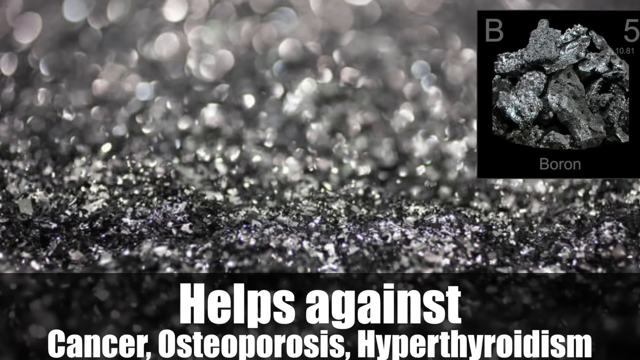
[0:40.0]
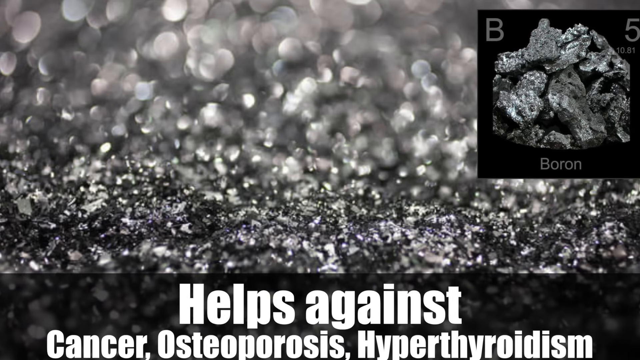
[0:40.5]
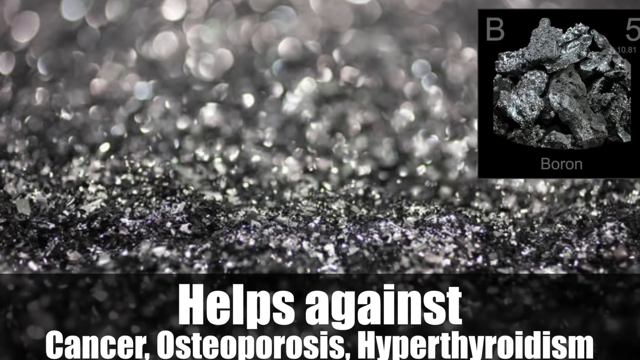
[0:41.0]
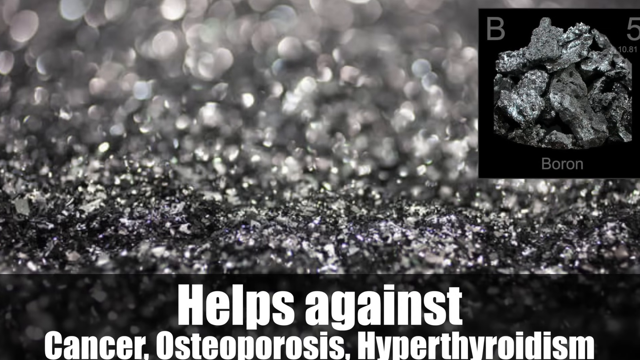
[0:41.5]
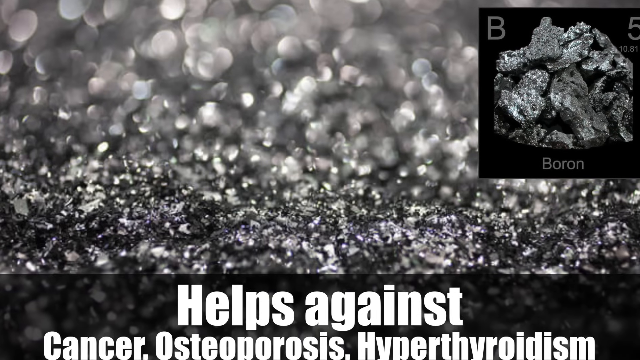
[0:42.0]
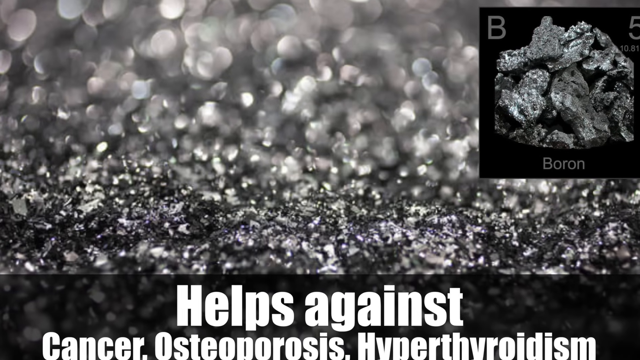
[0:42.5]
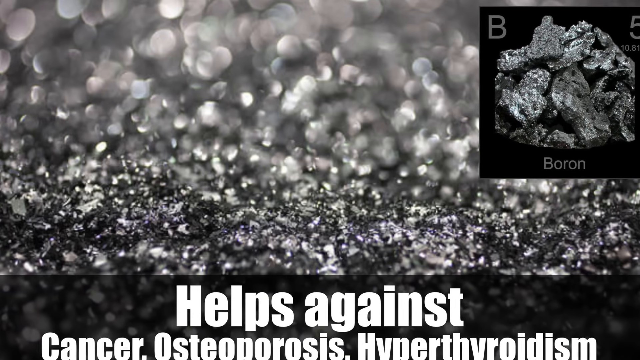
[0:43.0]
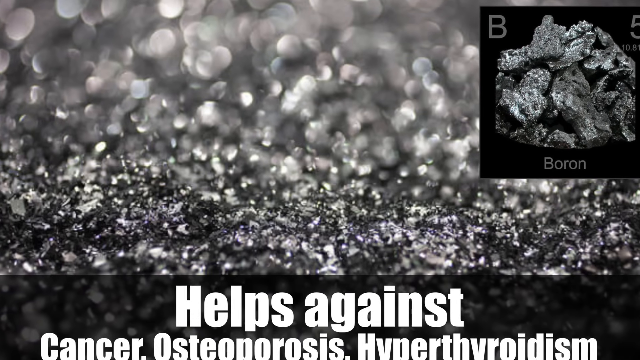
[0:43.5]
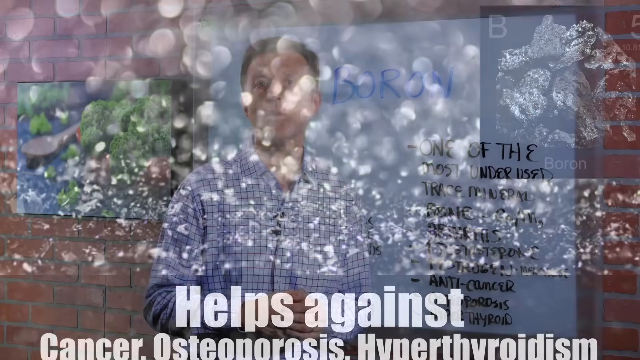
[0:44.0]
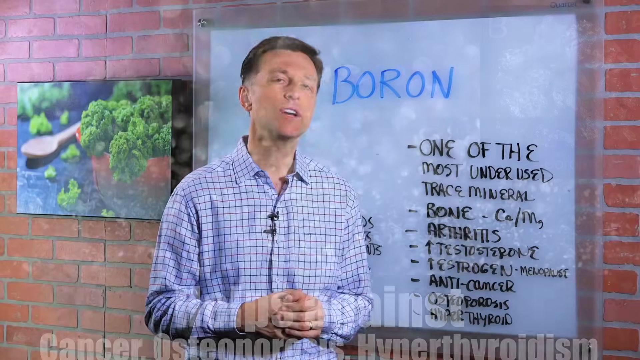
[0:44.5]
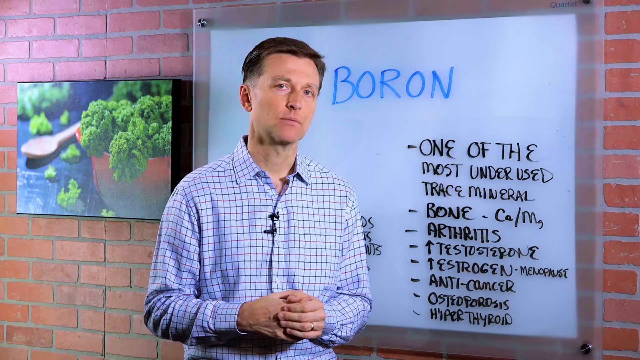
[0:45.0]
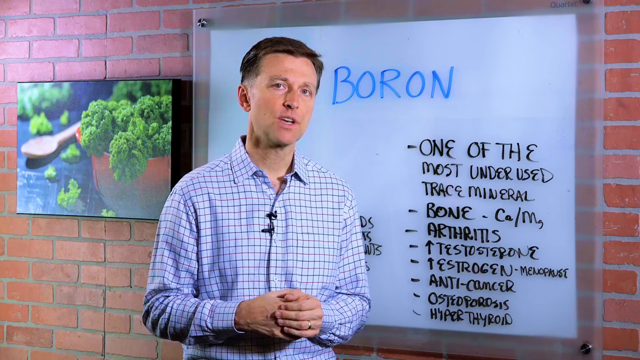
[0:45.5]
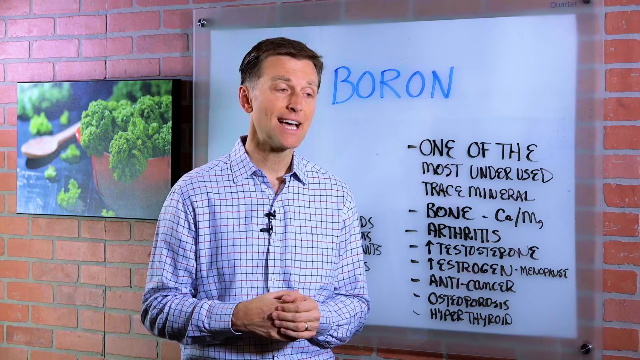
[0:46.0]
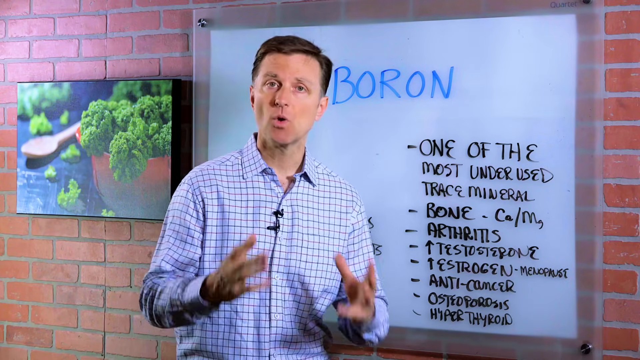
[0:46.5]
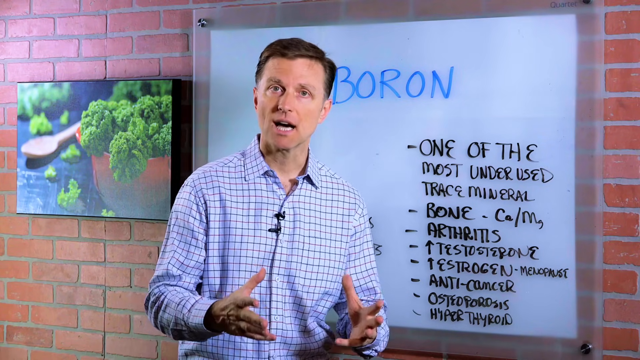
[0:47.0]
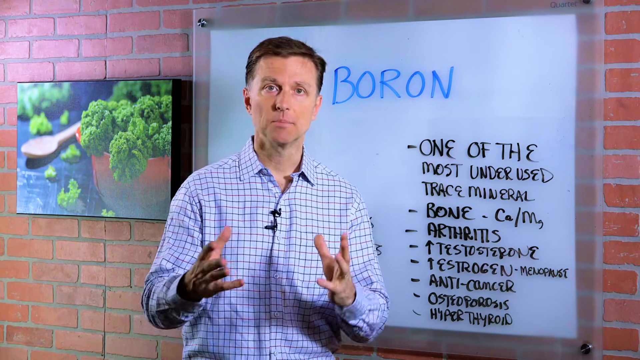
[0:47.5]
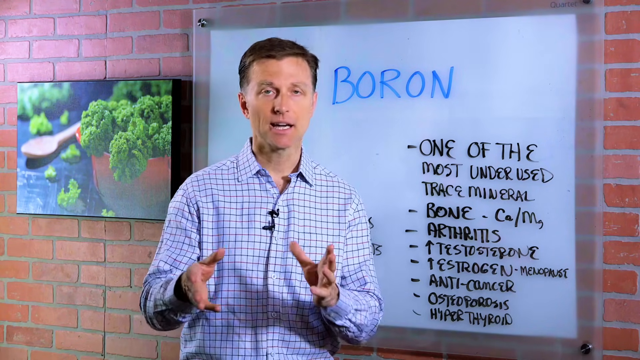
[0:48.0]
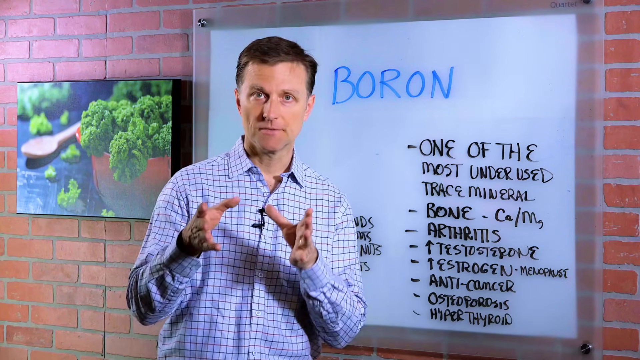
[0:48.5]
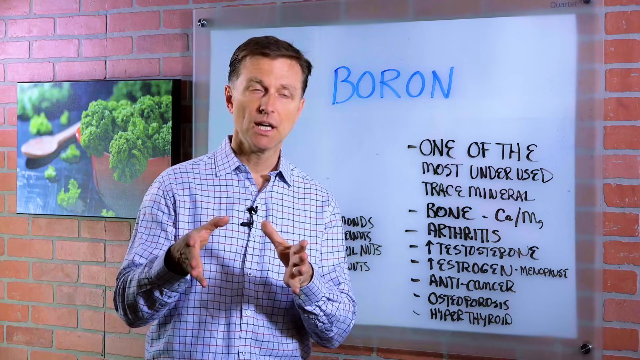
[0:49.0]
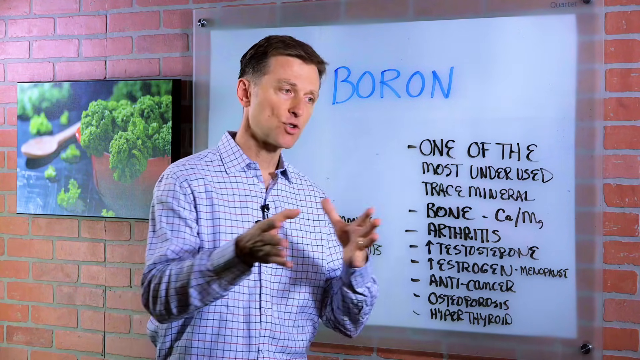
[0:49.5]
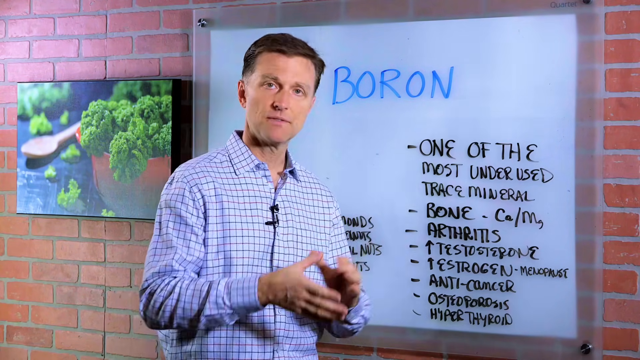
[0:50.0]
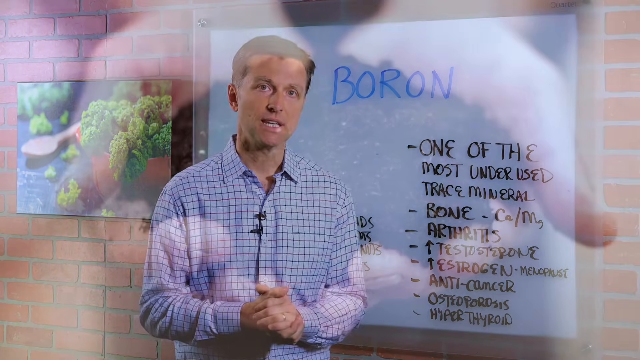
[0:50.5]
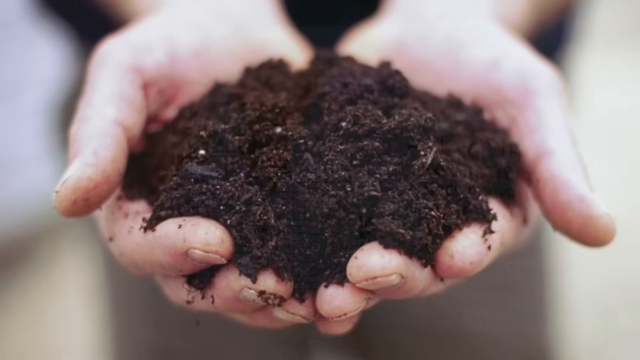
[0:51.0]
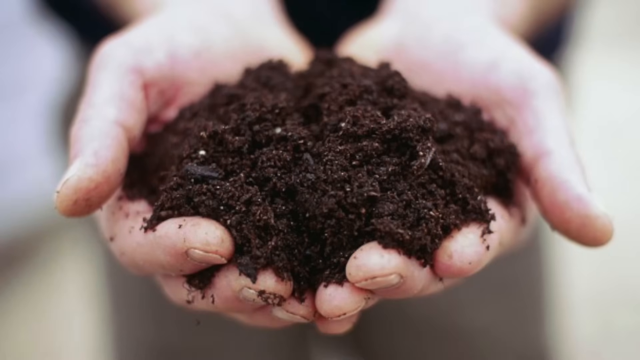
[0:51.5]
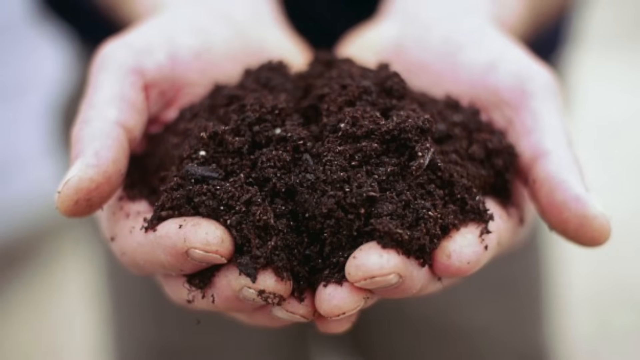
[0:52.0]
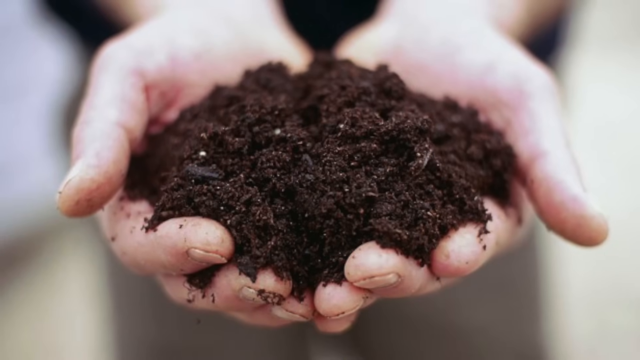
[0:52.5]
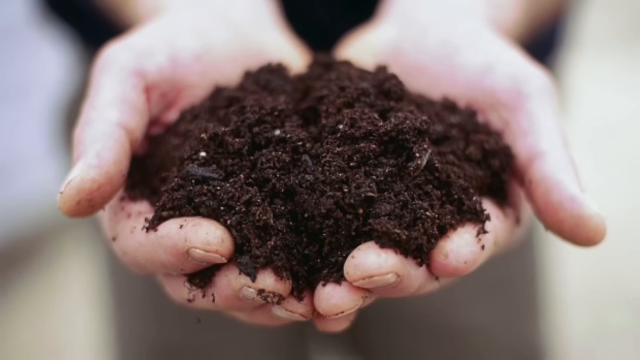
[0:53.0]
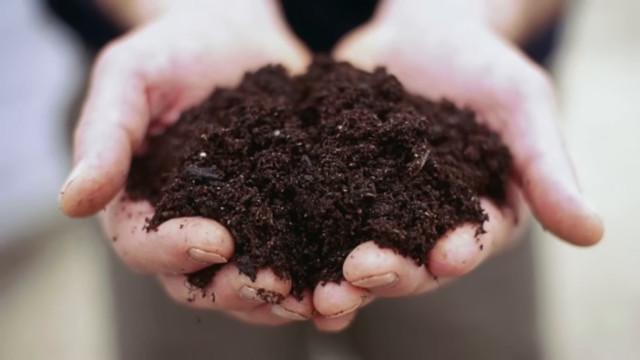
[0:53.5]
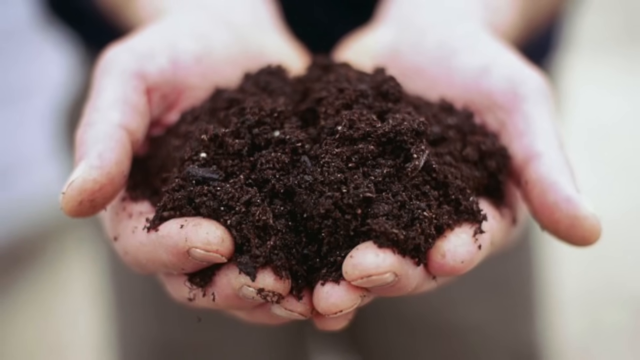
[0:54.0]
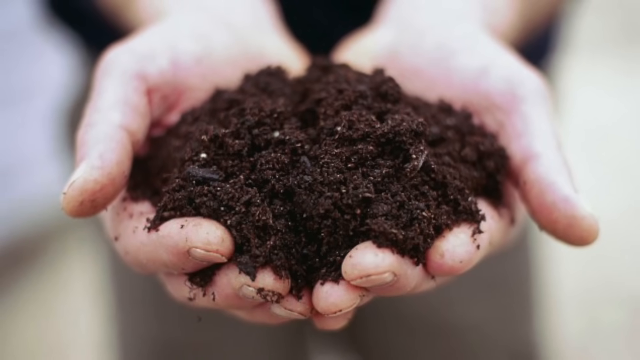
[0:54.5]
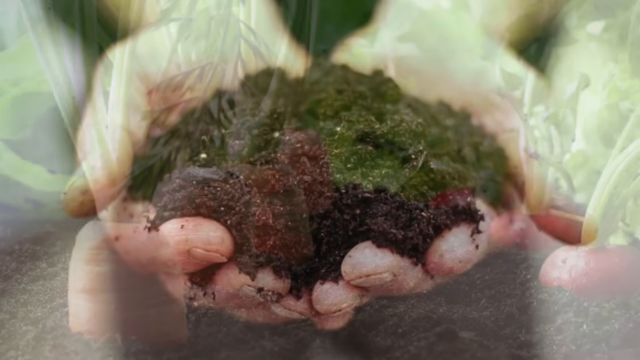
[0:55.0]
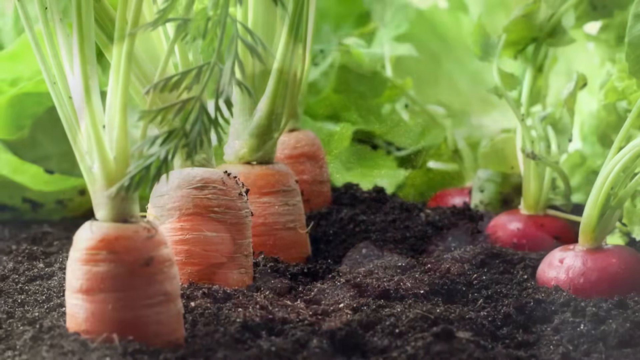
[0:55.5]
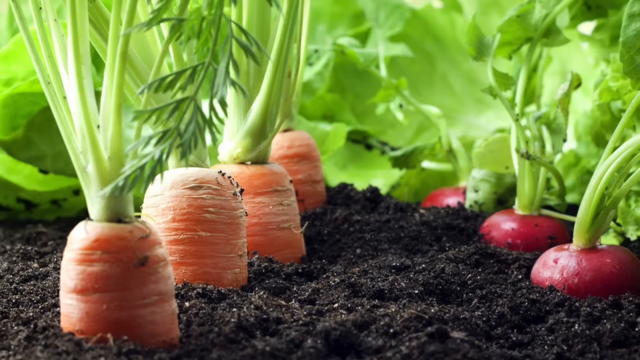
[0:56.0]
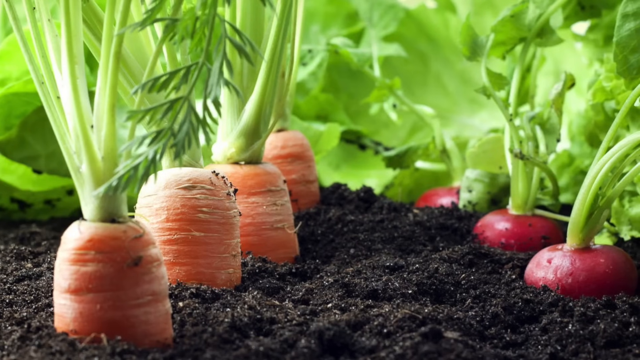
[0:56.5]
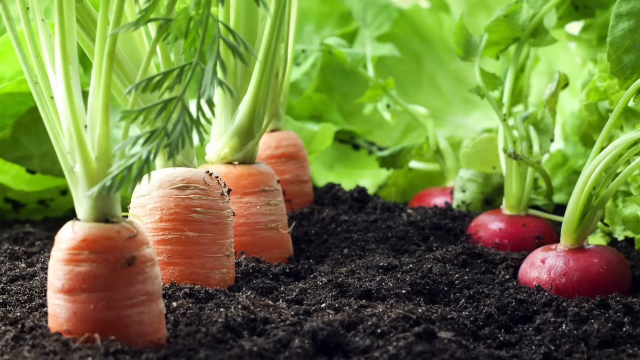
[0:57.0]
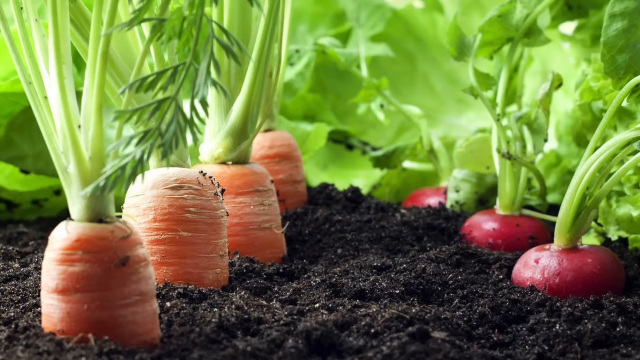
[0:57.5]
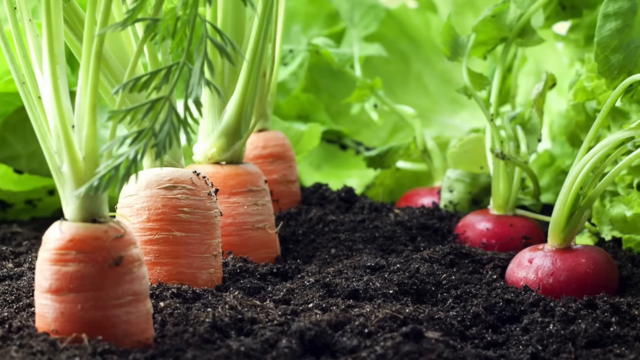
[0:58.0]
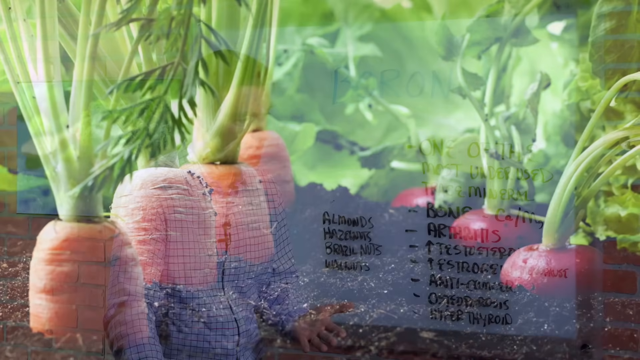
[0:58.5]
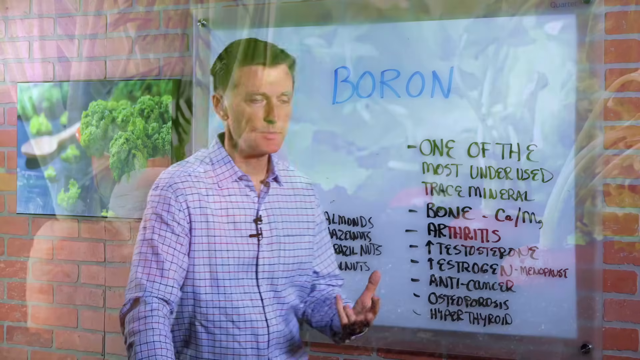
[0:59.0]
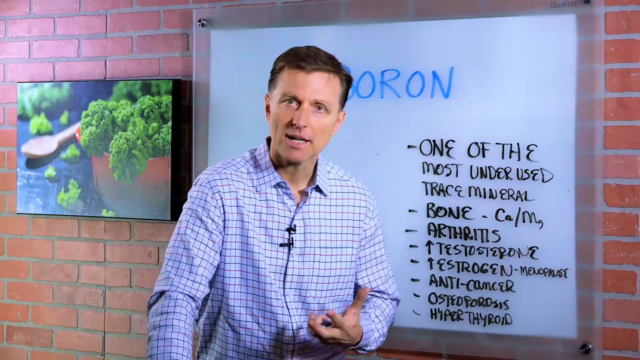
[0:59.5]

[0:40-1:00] A black screen that looks like crystals says "helps against cancer, osteoporosis, and hypothyroidism." Then a pair of hands holds up a handful of soil in front of the camera. The video cuts to a brown-haired man wearing a light blue long-sleeve button-up shirt with small dark blue squares on it. He stands in front of a white work board that says "one of the most underused minerals," followed by "bone," "arthritis," "testosterone," "estrogen," "anti-cancer," "osteoporosis," and "hypothyroidism." The video then cuts to potting soil in which four orange carrots with green stalks can be seen, with four red radishes with green stalks to the right of them.